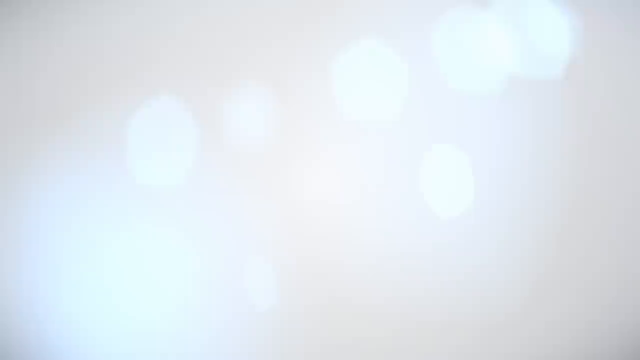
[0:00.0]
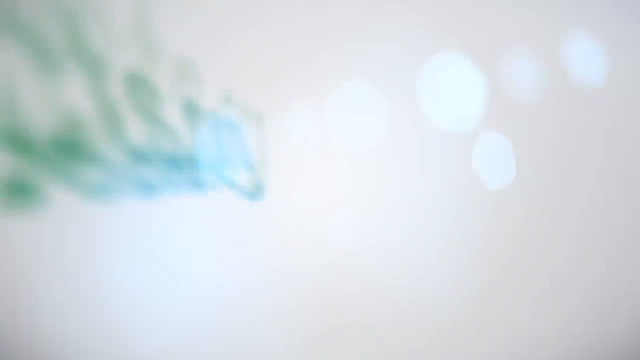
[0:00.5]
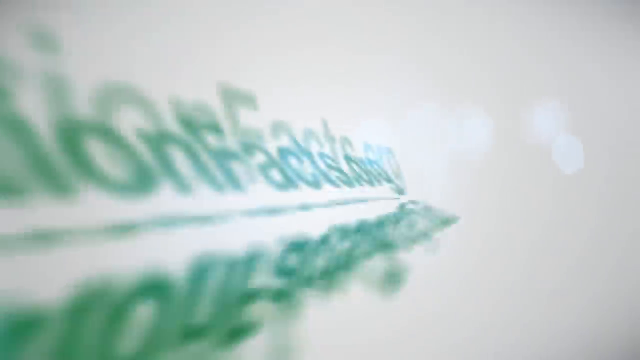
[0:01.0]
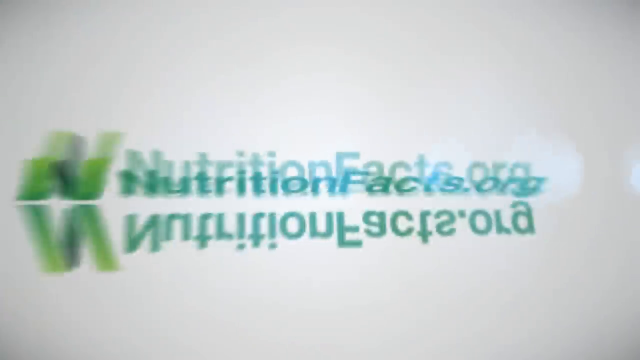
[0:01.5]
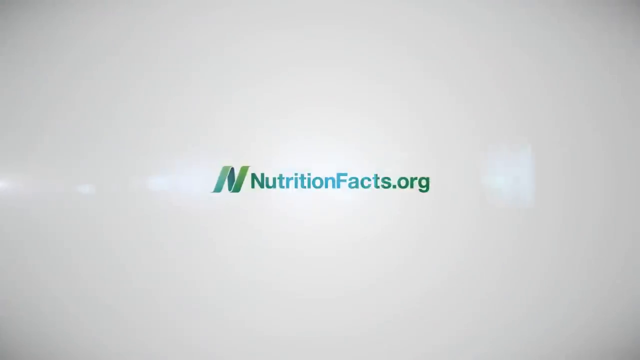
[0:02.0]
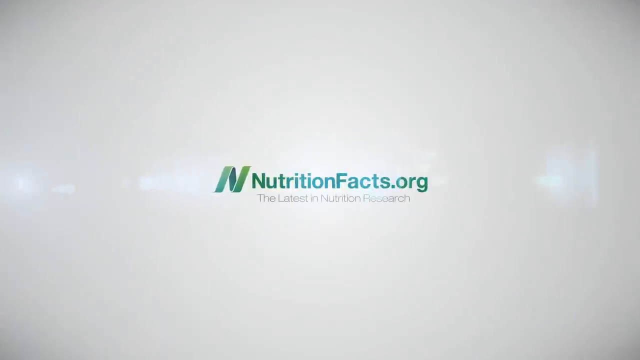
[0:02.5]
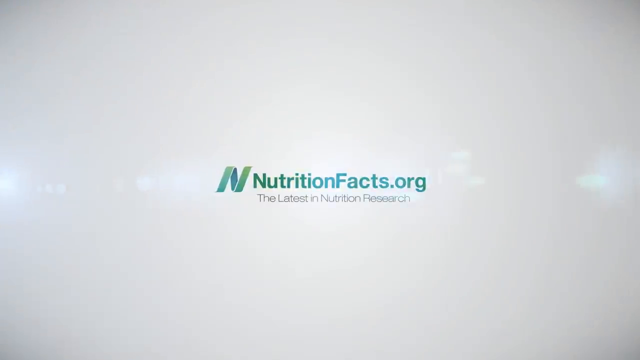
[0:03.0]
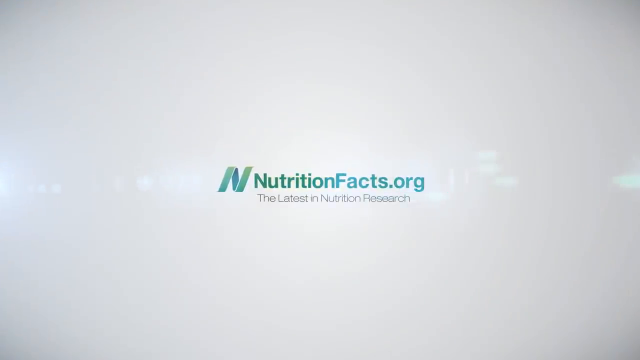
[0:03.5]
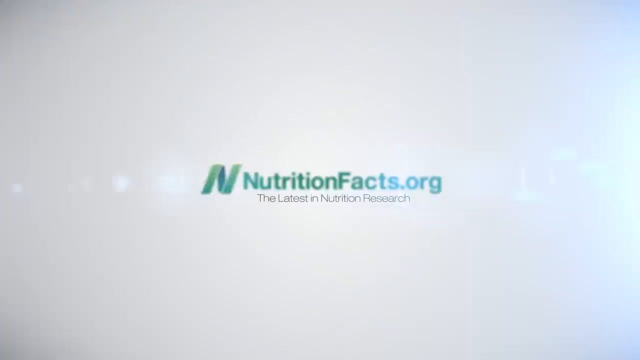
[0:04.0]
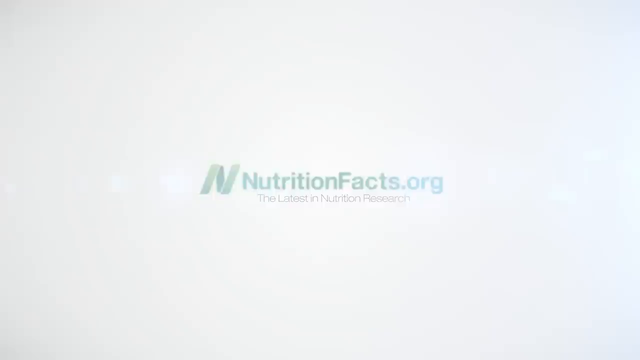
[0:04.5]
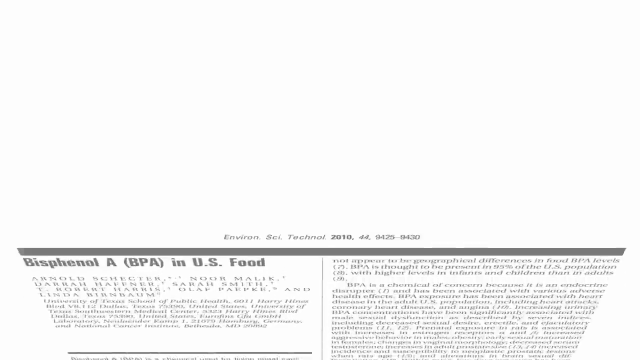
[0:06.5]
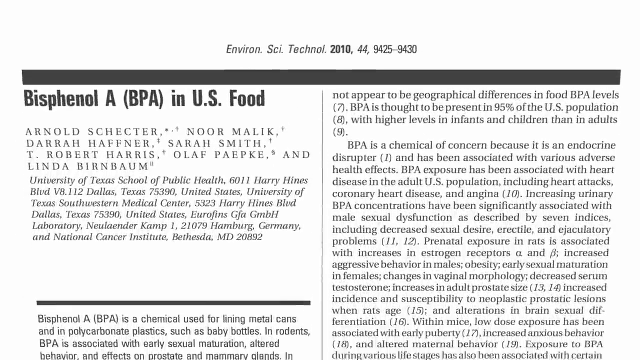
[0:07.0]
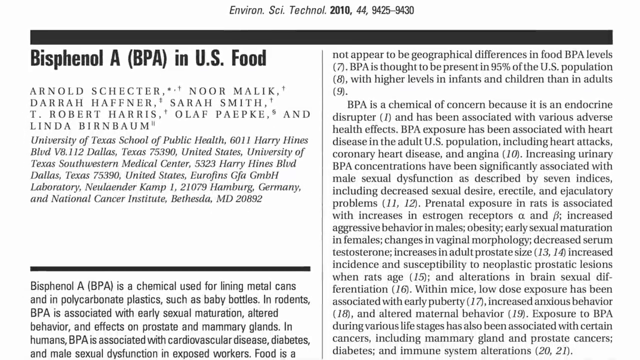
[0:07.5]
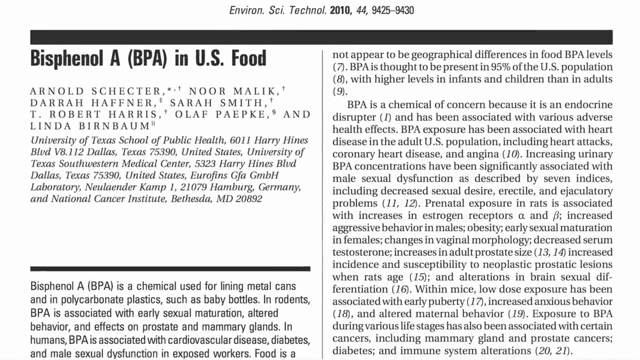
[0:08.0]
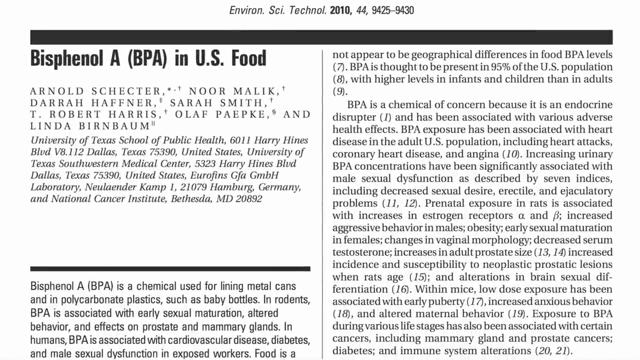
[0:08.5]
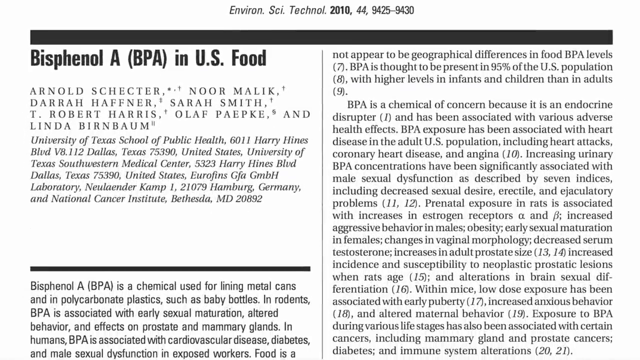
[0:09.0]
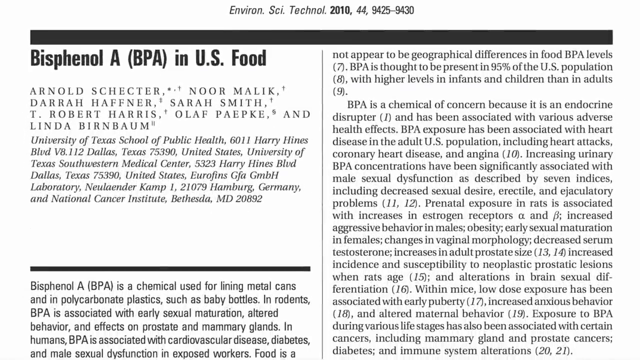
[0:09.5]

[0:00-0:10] A logo sort of rotates onto the screen against a gray background. It shows a green capital N, slanted to the right as if in italics, and the text "nutritionfacts.org" in green and blue. Beneath it, "the latest in nutrition research" appears in light gray letters. The scene then moves to a white background where a page appears, headed "Environsci-Technol 2010-44-9425-9430". It looks like a large research study. Above it there is a long, skinny black bar, and black letters read "bisphenol A, BPA in U.S. food". Below are the names of the many people involved in the study, followed by a long block of text saying where it is from, and then the study itself. The view stays on that page for a moment.